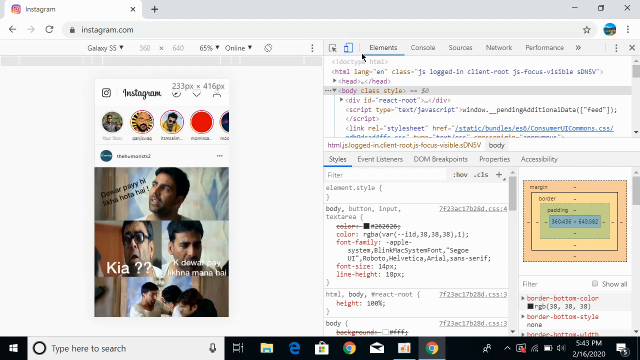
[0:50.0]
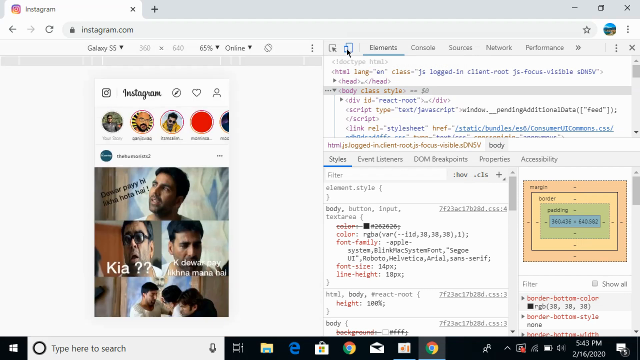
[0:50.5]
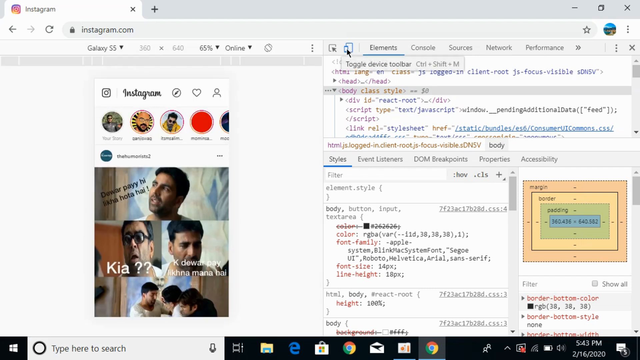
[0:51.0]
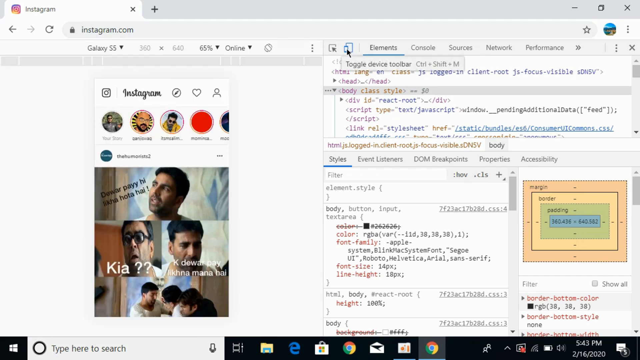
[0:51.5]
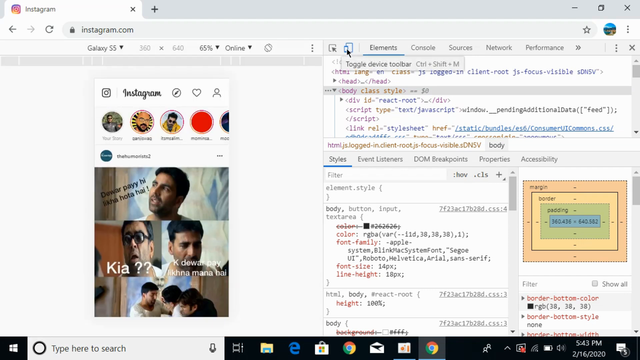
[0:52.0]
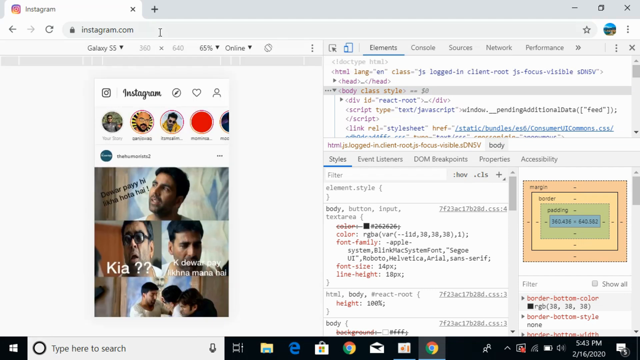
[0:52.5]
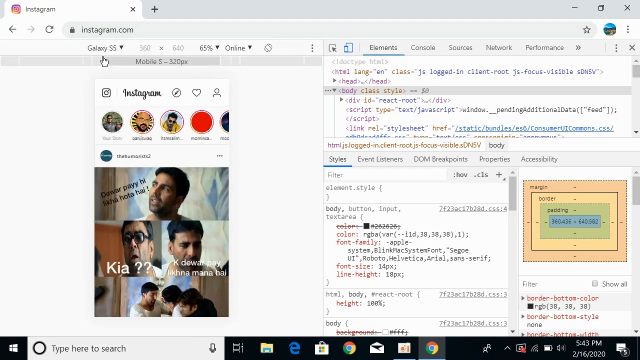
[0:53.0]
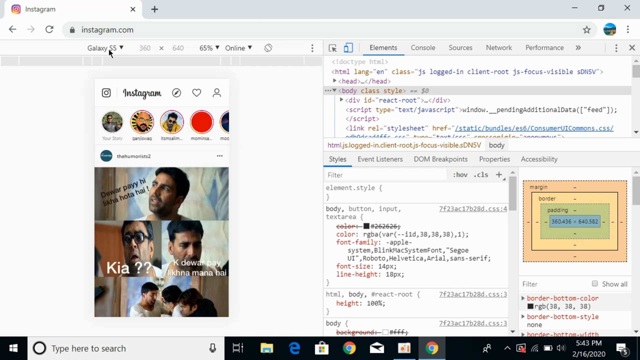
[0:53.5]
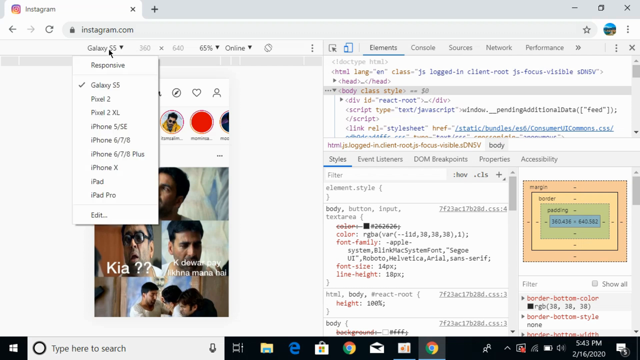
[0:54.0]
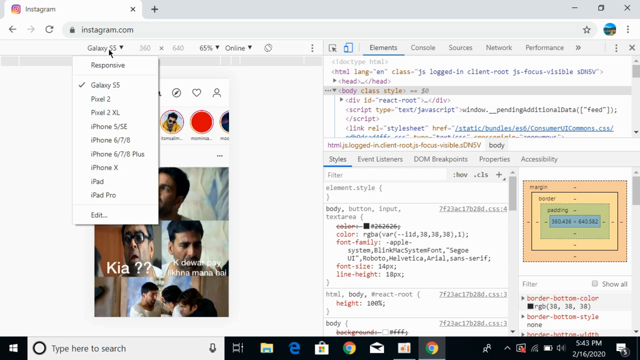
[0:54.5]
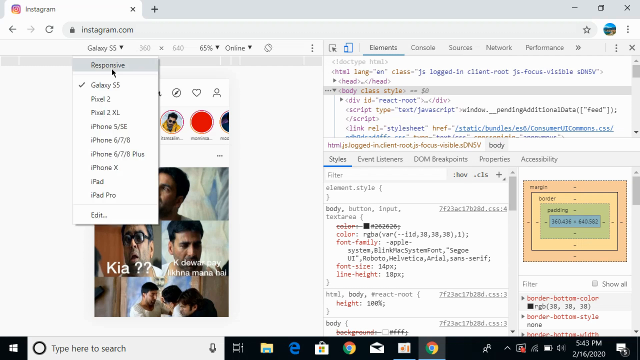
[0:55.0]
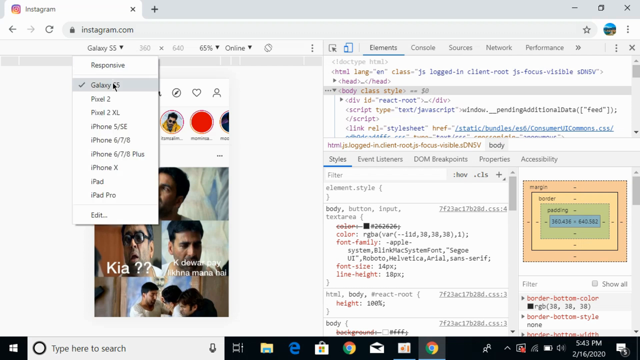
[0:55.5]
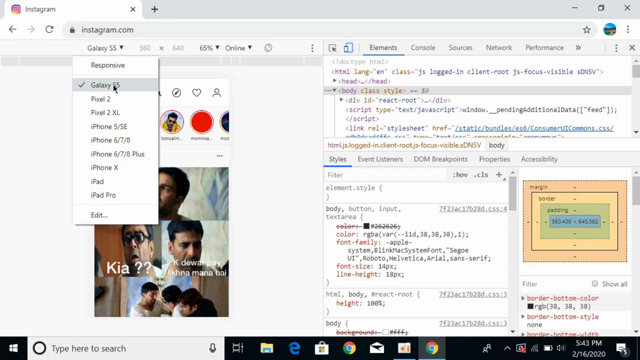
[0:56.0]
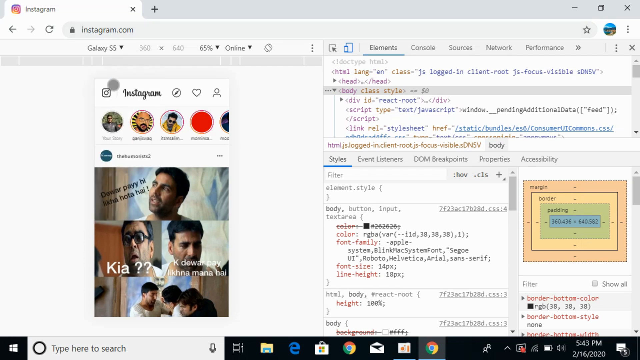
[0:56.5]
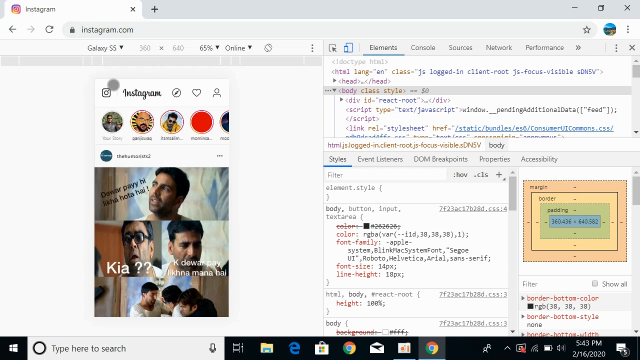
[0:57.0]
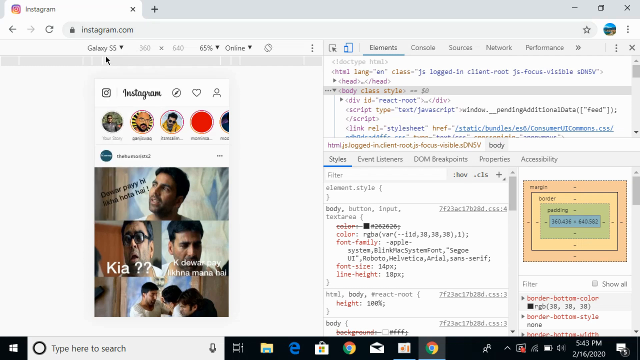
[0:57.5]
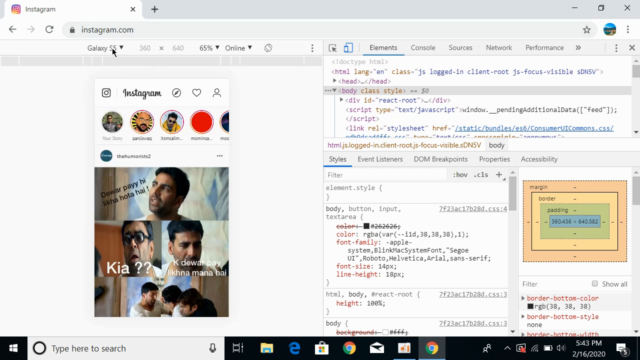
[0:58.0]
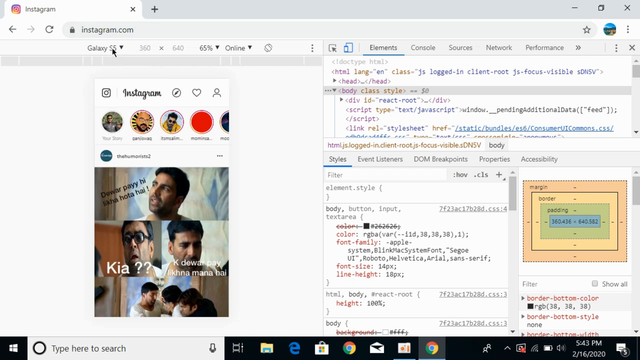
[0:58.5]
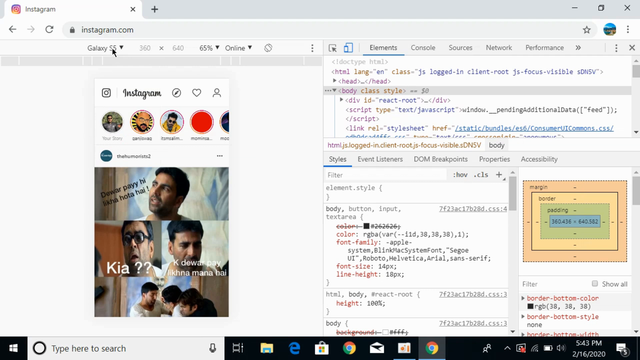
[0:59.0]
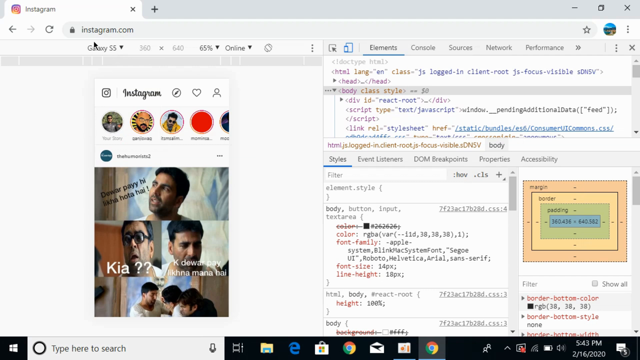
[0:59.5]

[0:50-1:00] A window is open on a computer in split screen, with an Instagram profile of a man in his 40s on the left and a developer tools pop-up window on the right, side by side. The developer tools pop-up shows different options: elements, sources, network and performance, which are drop-down menus. On the left there is an icon showing "Galaxy S3". The cursor moves to click on the Galaxy S3 icon, and a drop-down menu appears. The user scrolls down to the second option and then clicks the refresh icon to refresh the page.